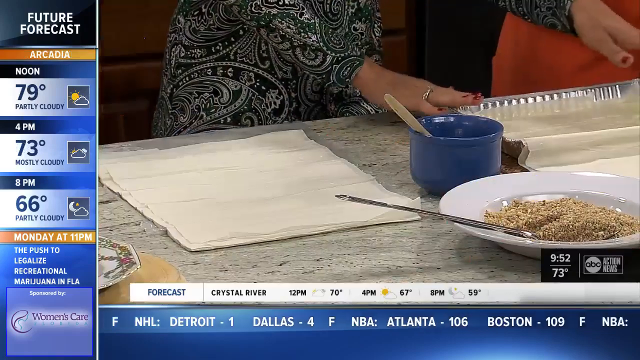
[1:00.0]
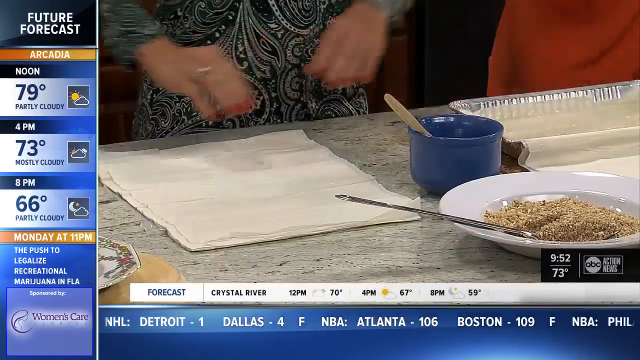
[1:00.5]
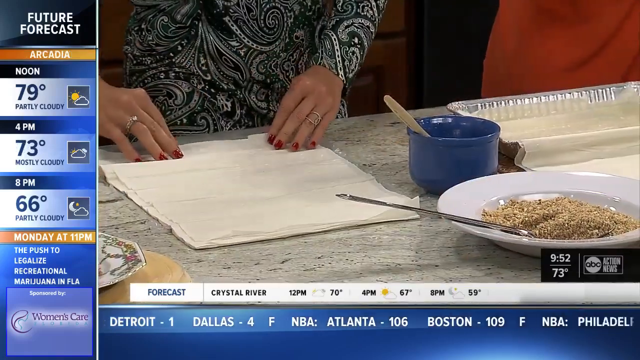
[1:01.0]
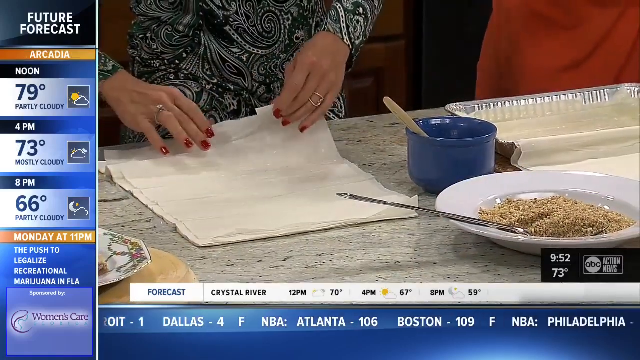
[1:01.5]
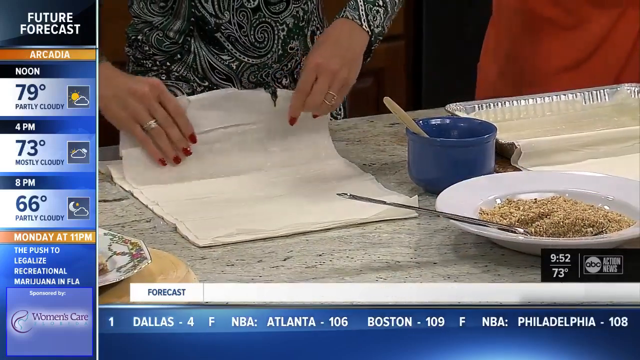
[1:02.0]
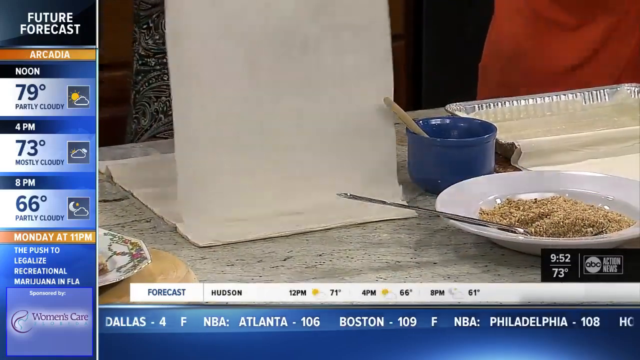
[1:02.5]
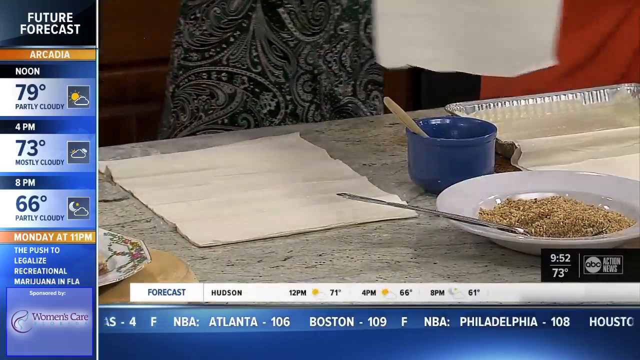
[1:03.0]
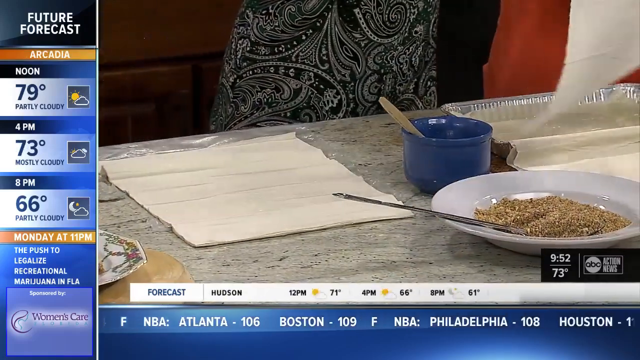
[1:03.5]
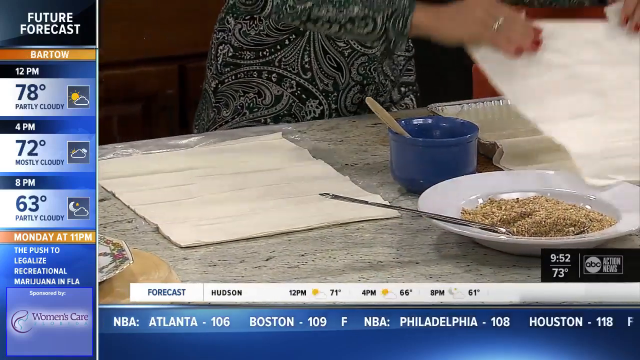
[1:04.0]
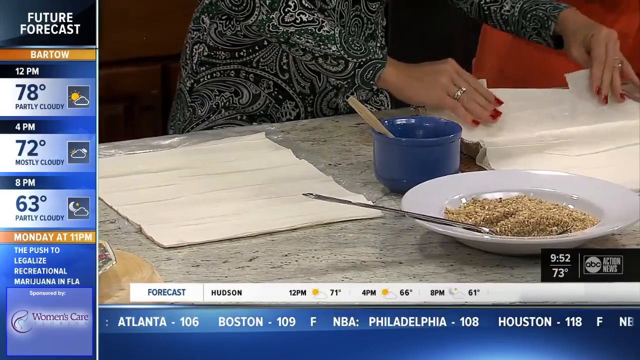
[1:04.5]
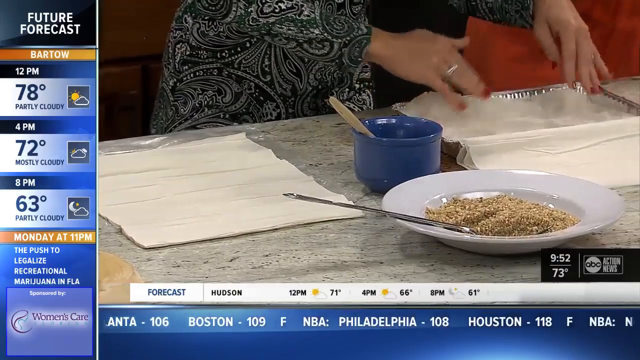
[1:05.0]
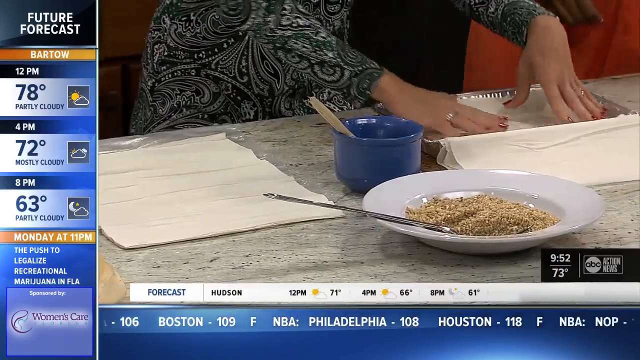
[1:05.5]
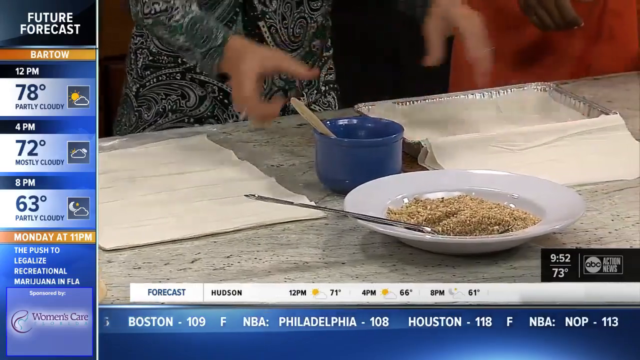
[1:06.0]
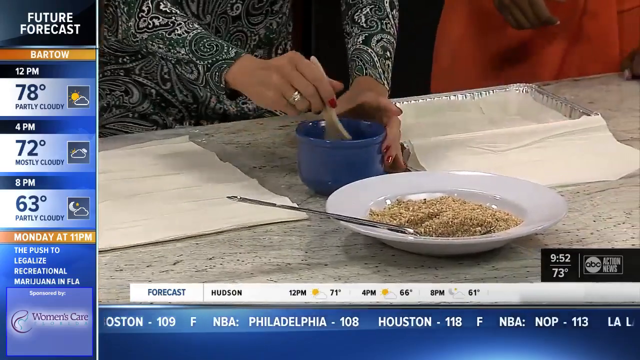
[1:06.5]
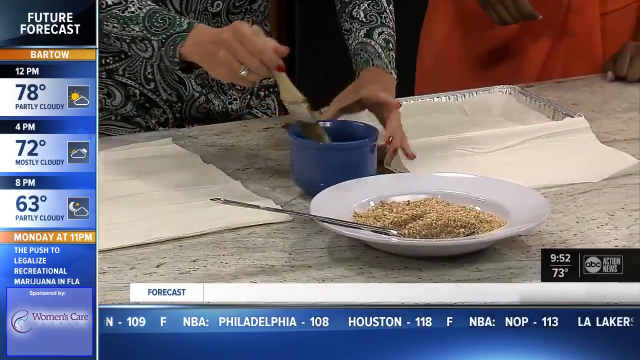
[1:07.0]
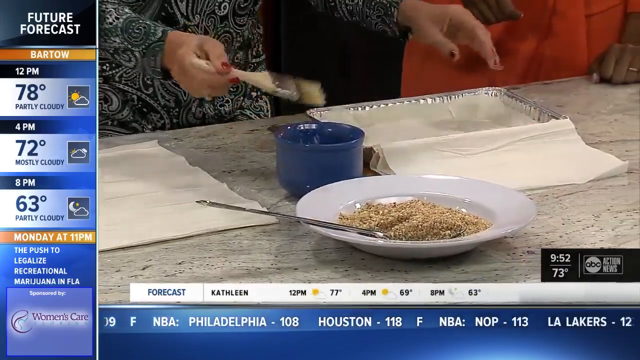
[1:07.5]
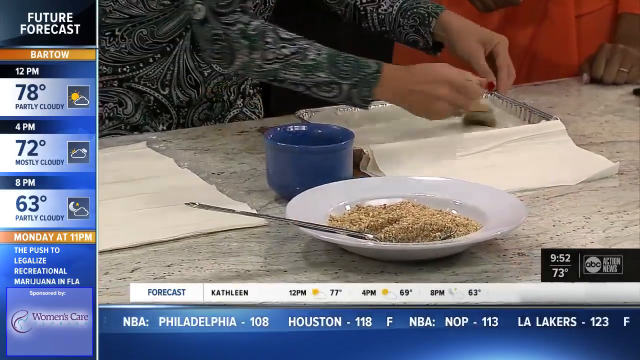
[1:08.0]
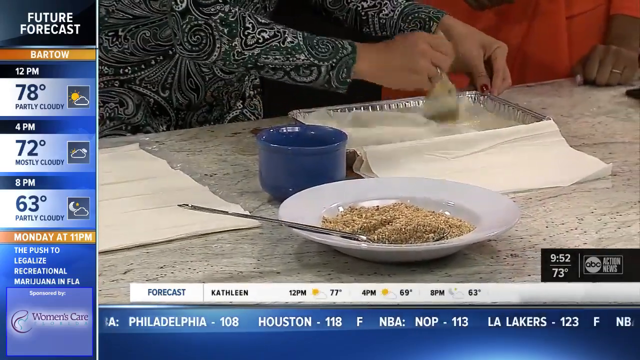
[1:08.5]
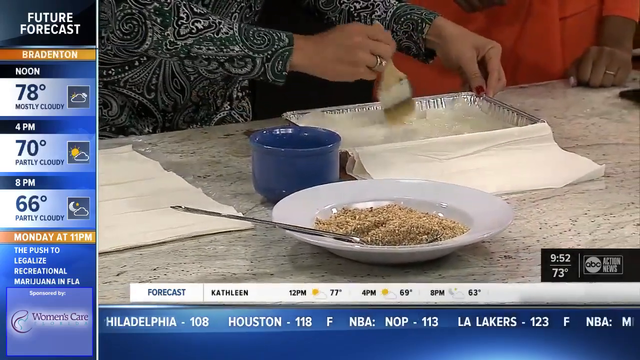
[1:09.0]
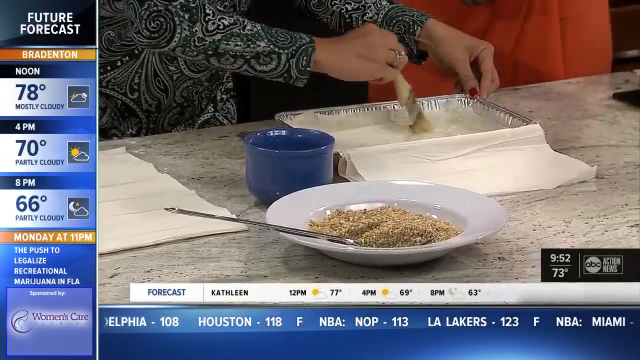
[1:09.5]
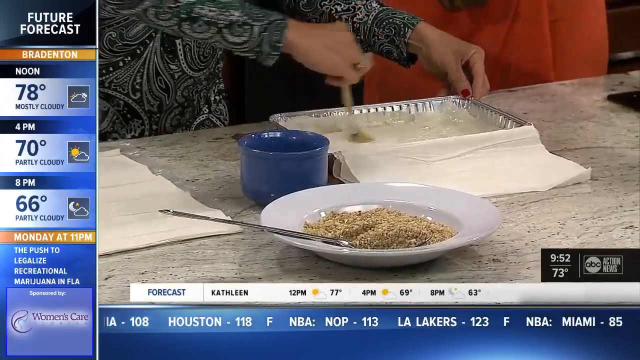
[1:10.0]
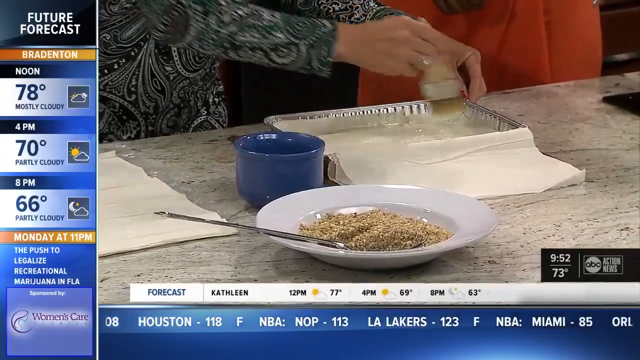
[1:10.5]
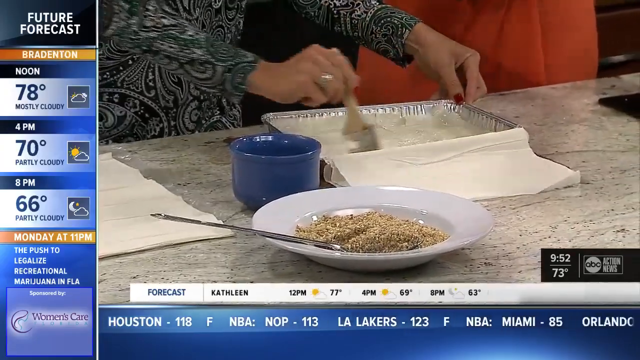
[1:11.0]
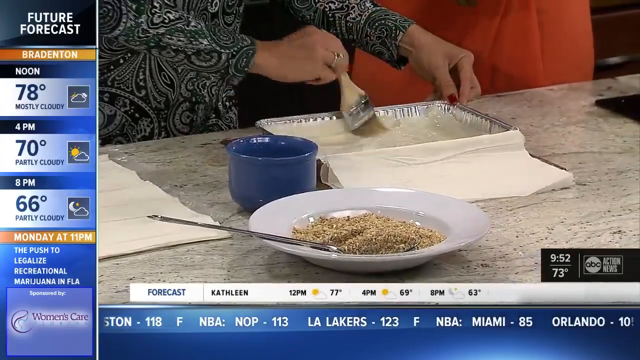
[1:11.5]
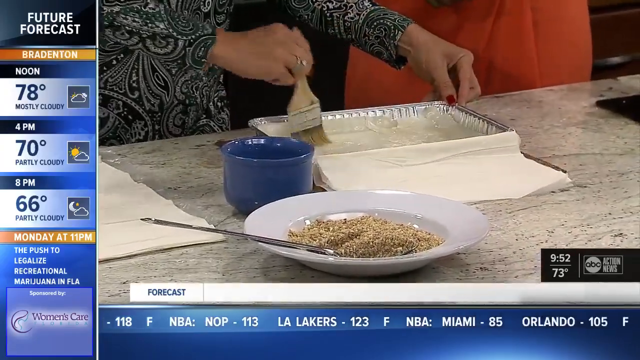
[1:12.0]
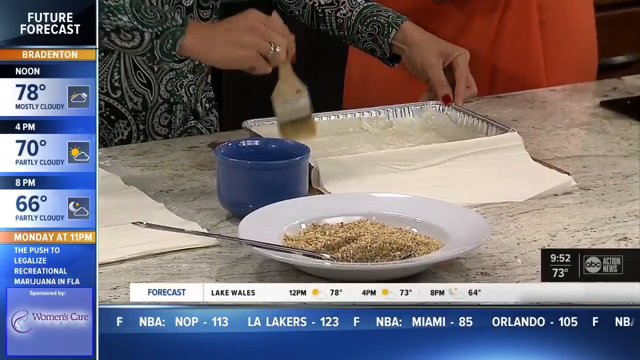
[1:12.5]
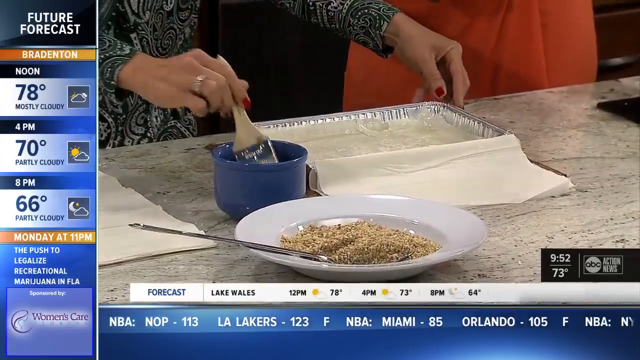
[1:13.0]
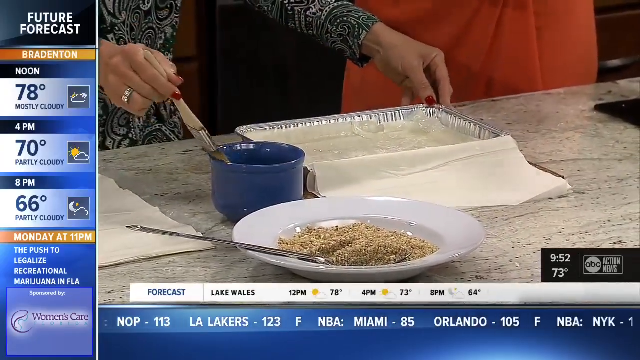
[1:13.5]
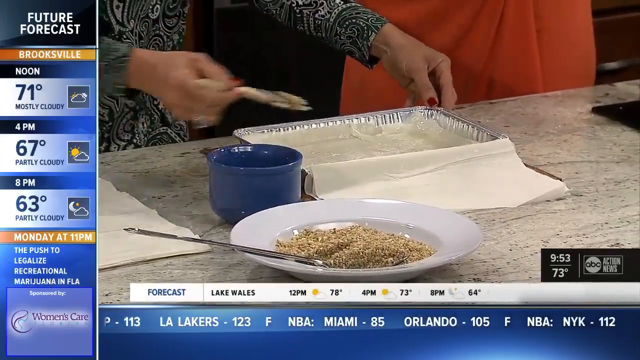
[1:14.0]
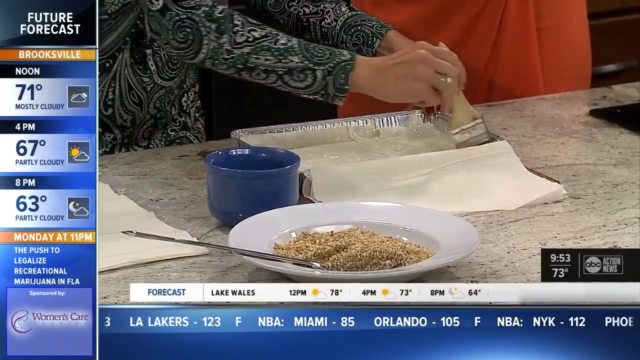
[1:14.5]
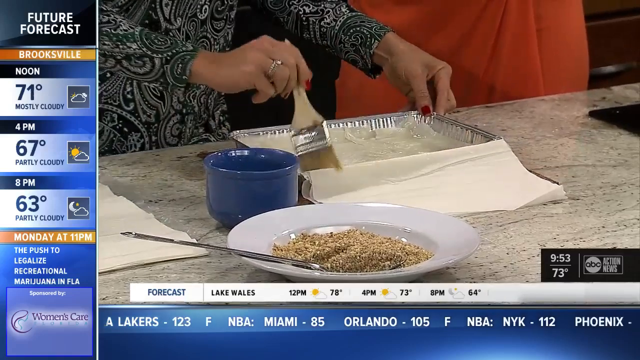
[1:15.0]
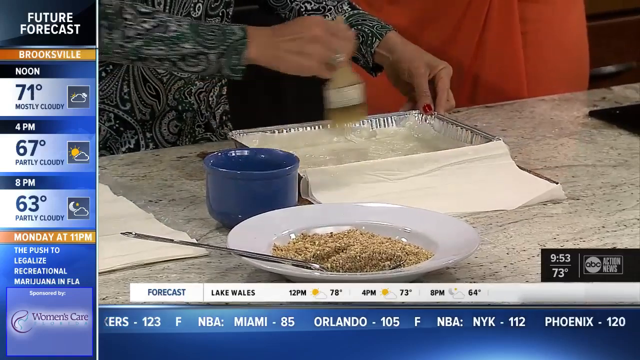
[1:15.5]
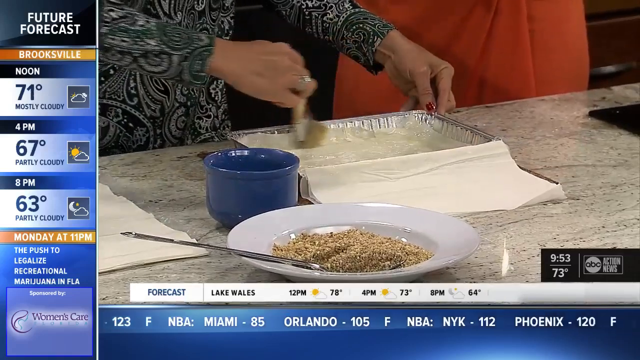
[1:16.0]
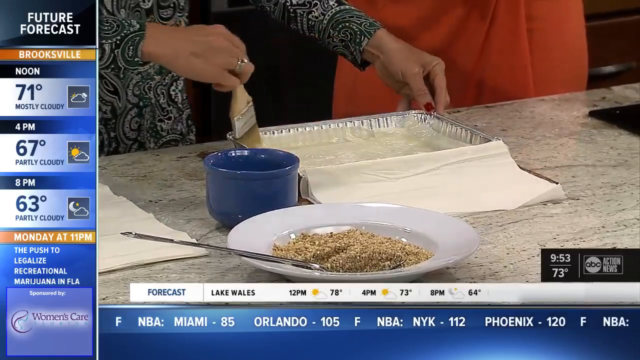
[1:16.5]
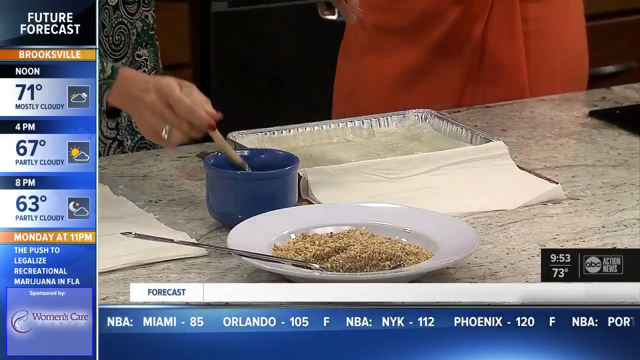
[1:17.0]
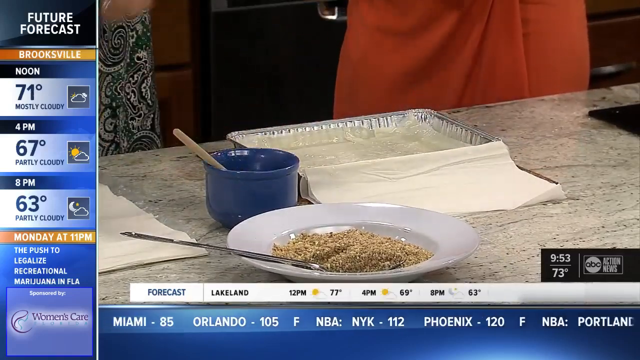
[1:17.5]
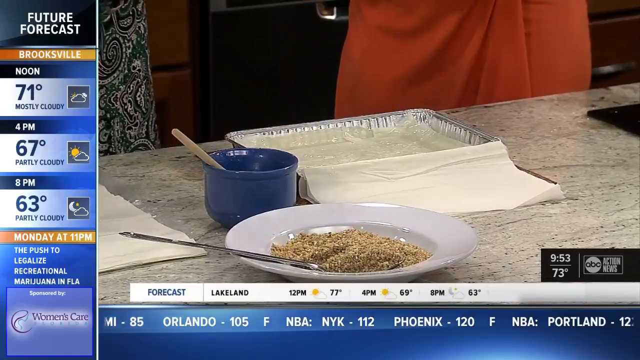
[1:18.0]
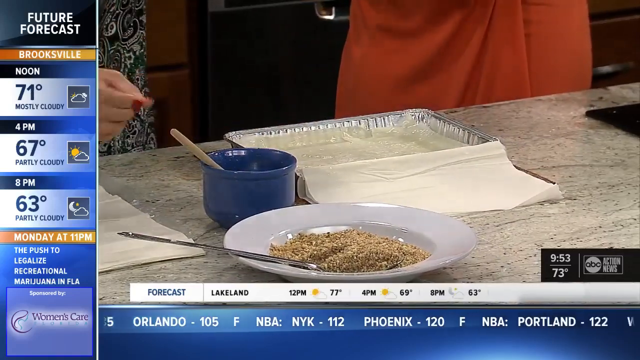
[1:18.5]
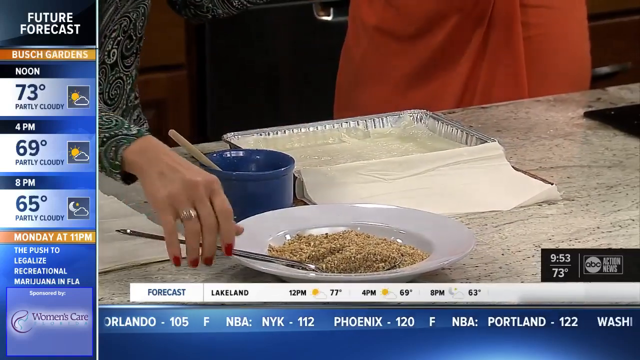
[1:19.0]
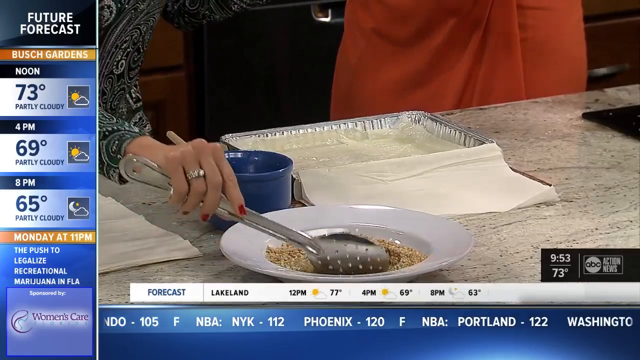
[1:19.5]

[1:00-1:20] A series of pastry sheets lie on a table that looks to be marble or stone. A woman's hand with a ring on her finger is visible. There is a bowl of some type of filling with a spoon extending out of it, which looks like a long silver spoon, and a blue-looking cup with an object protruding out of it. The future forecast on the left side has switched to a different area, Arcadia: noon, 79 degrees; 4 p.m., 73 degrees, mostly cloudy; 8 p.m., 66 degrees, partly cloudy; and Monday at 11 p.m. The woman picks up a pastry strip and, with a brush that was protruding from the blue cup, brushes the pastry inside the pan, possibly with butter. She then goes for the bowl of filling and grabs the silver spoon.